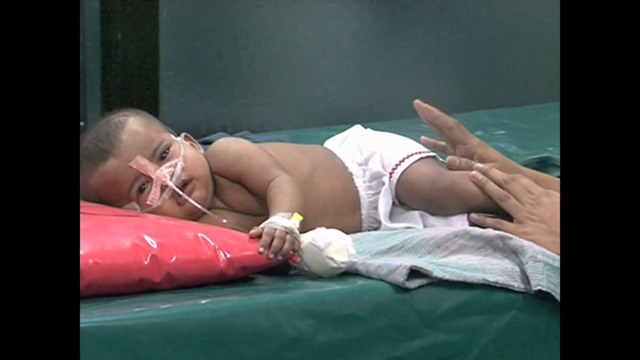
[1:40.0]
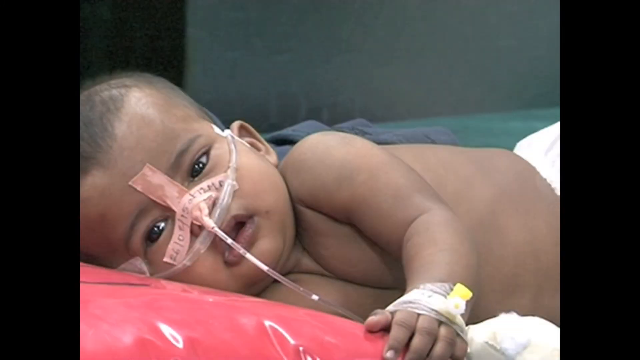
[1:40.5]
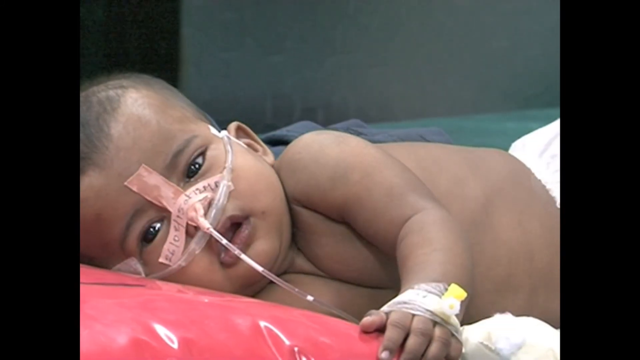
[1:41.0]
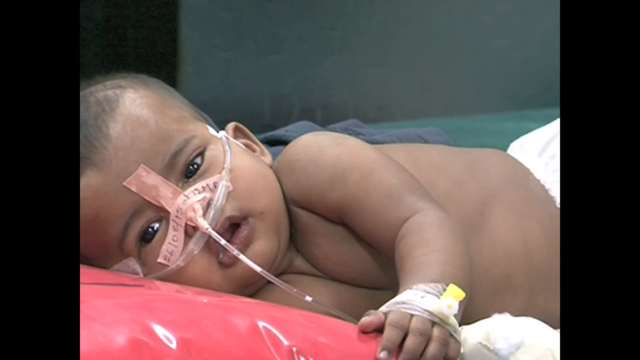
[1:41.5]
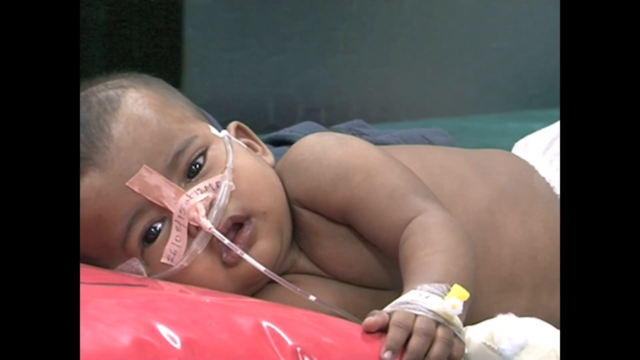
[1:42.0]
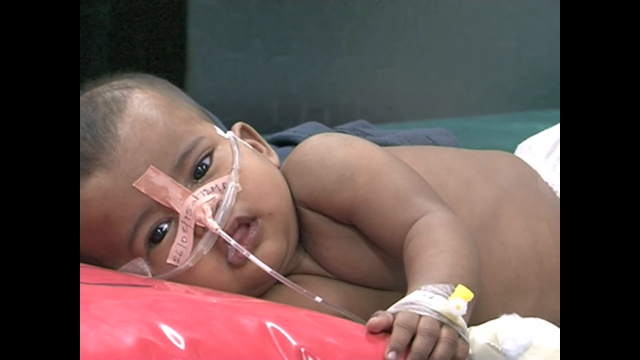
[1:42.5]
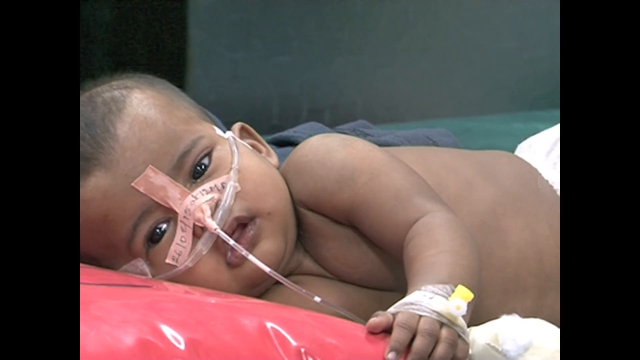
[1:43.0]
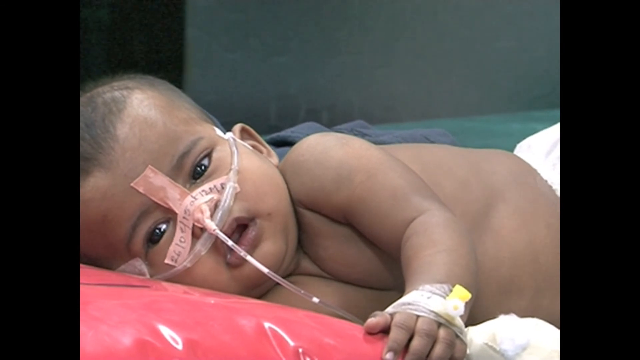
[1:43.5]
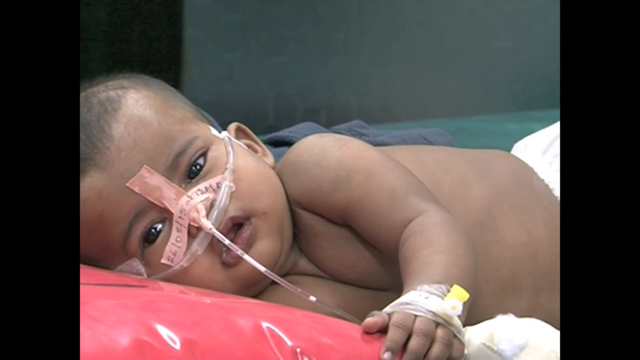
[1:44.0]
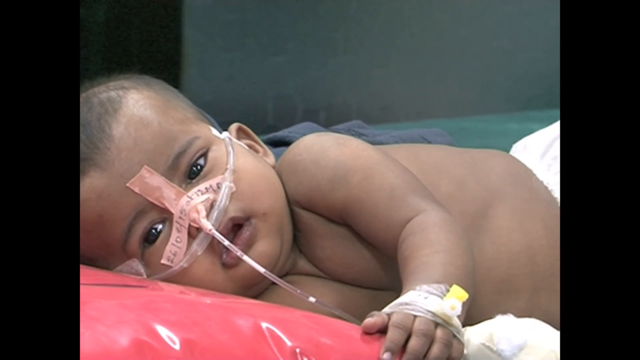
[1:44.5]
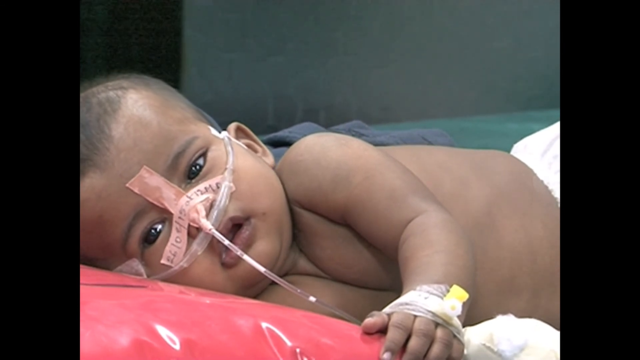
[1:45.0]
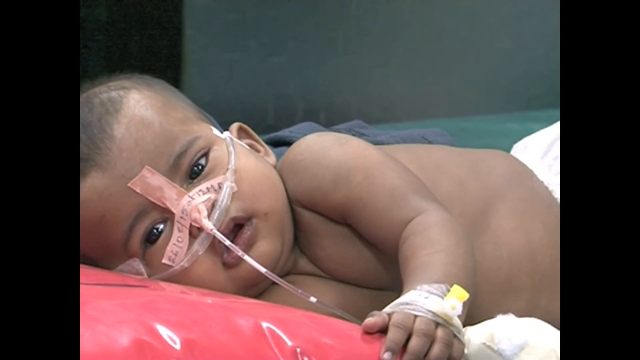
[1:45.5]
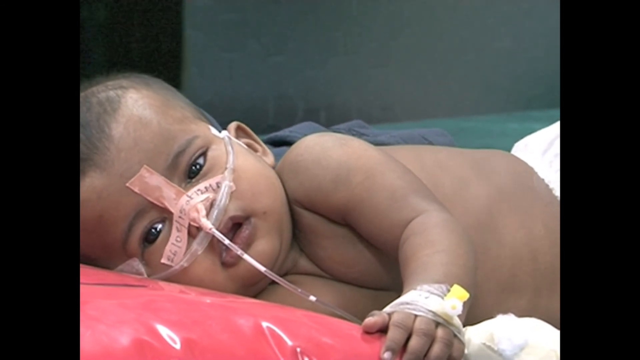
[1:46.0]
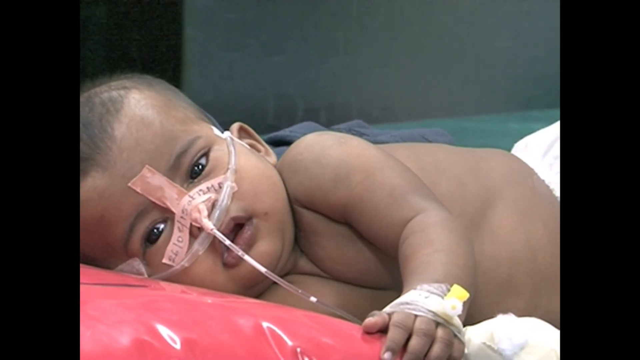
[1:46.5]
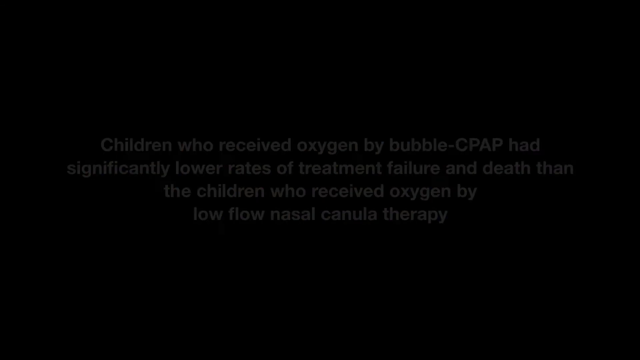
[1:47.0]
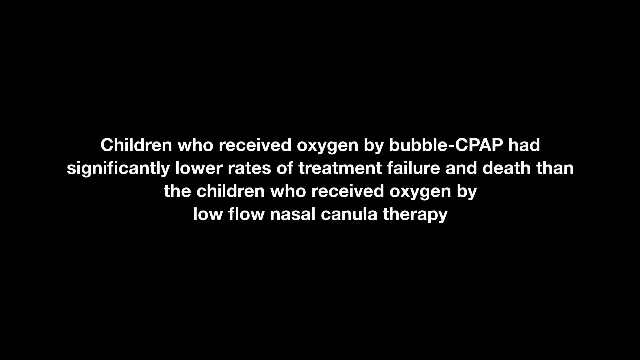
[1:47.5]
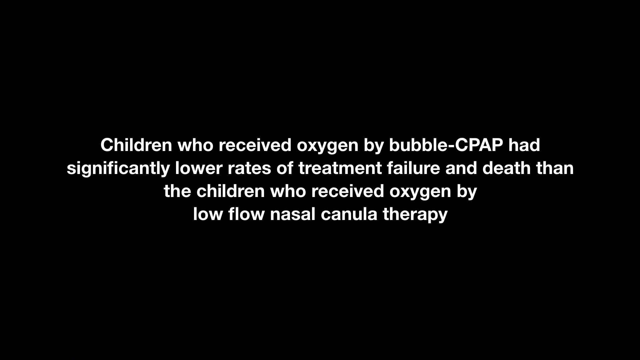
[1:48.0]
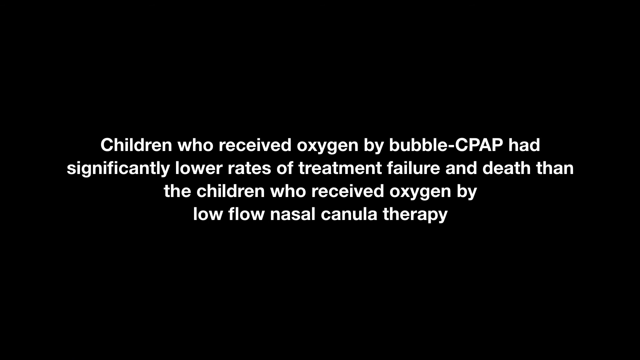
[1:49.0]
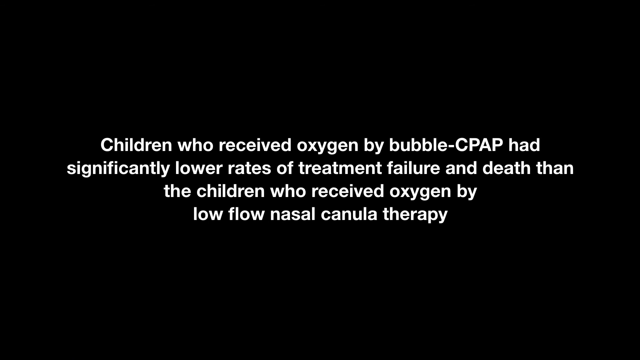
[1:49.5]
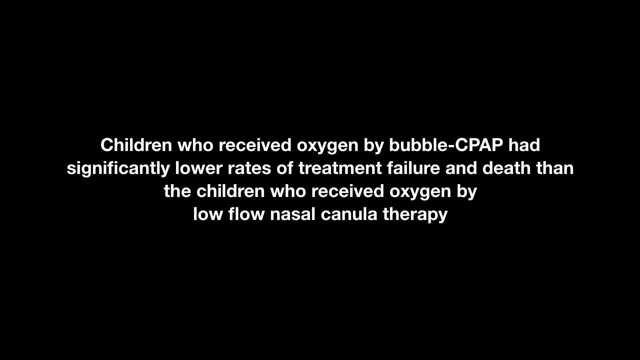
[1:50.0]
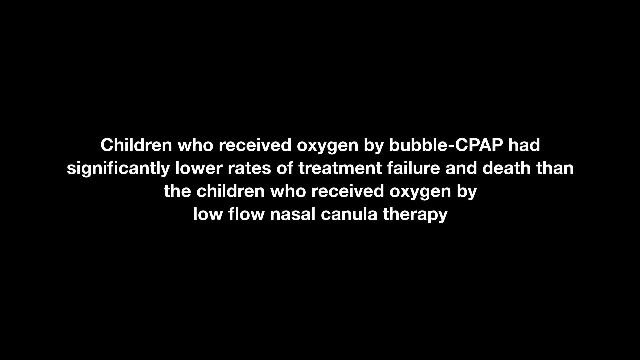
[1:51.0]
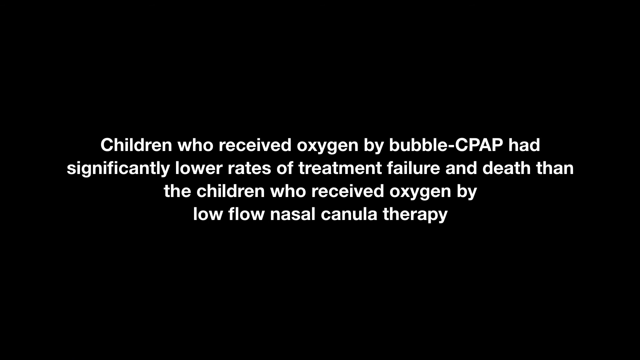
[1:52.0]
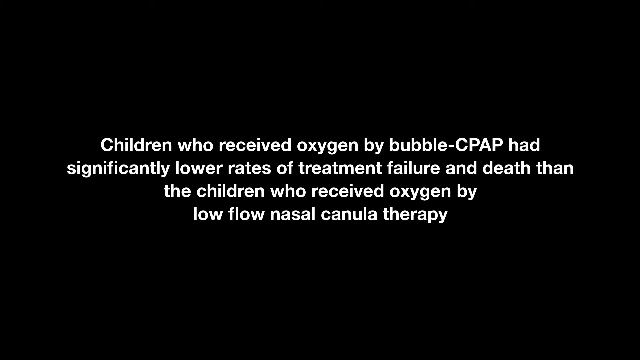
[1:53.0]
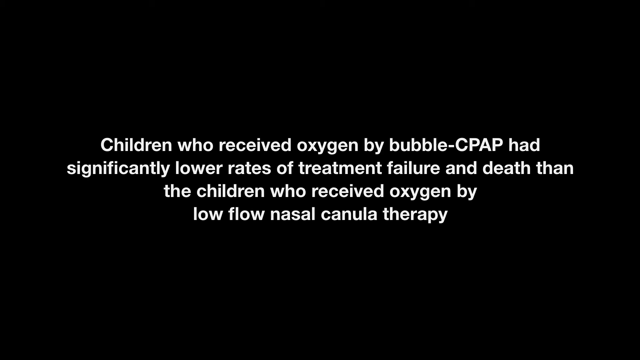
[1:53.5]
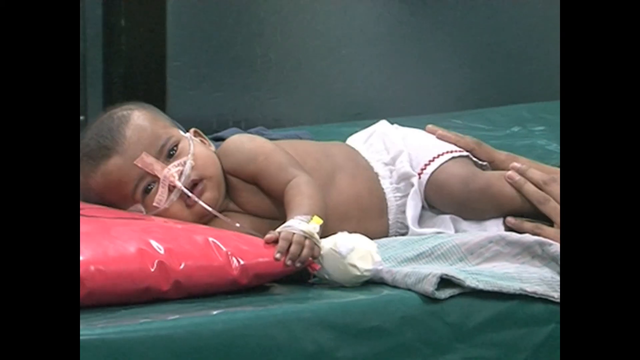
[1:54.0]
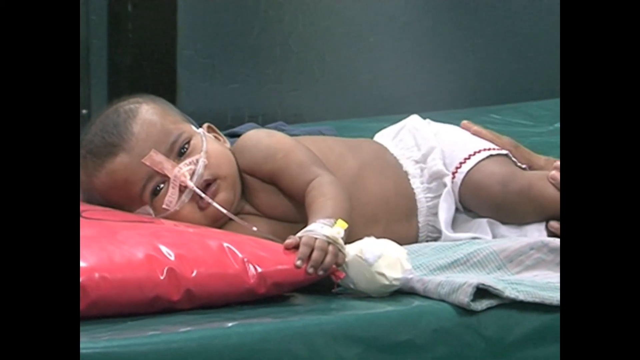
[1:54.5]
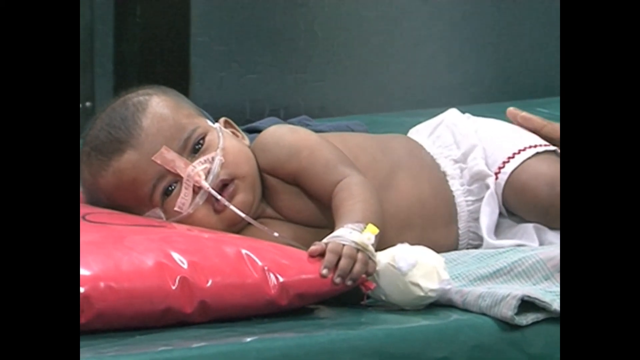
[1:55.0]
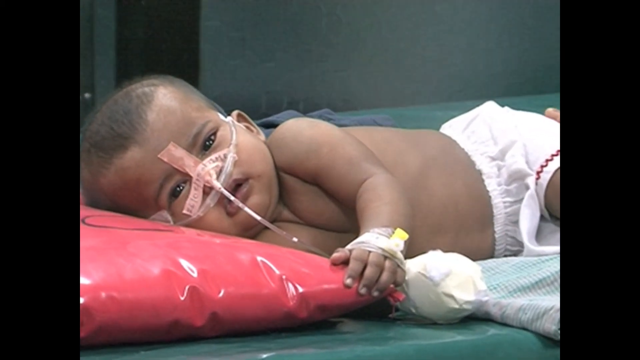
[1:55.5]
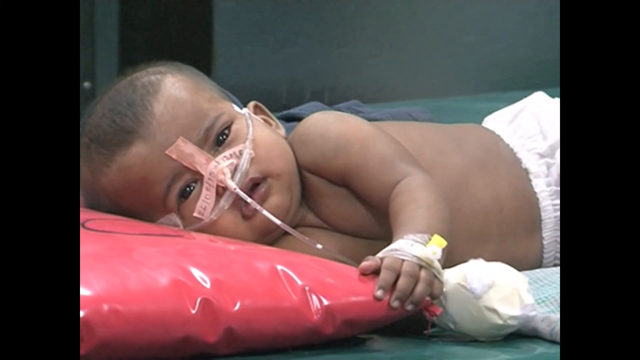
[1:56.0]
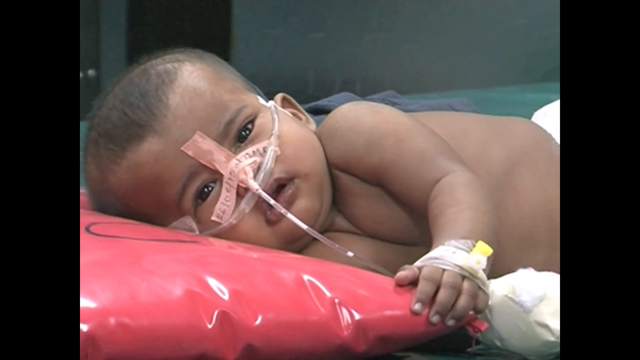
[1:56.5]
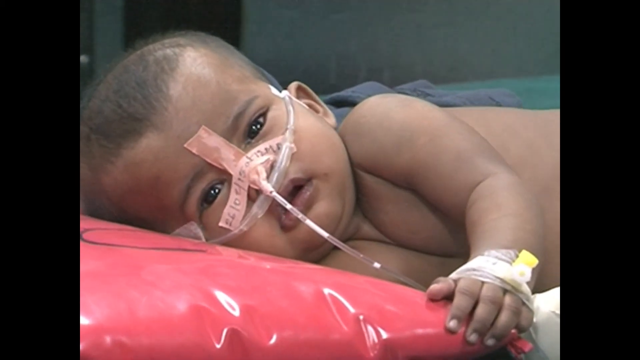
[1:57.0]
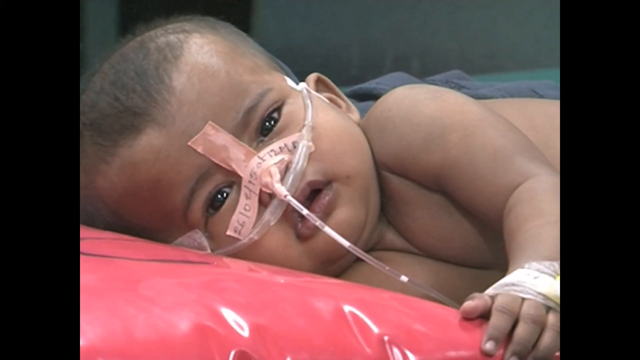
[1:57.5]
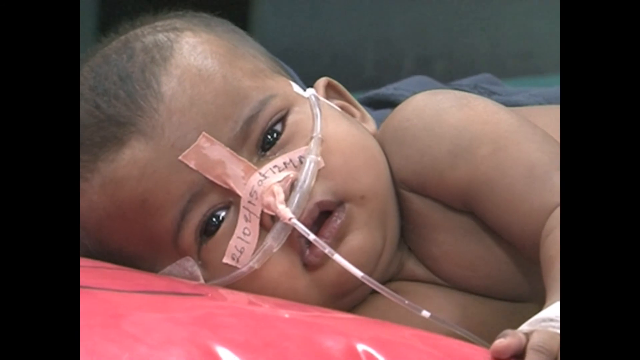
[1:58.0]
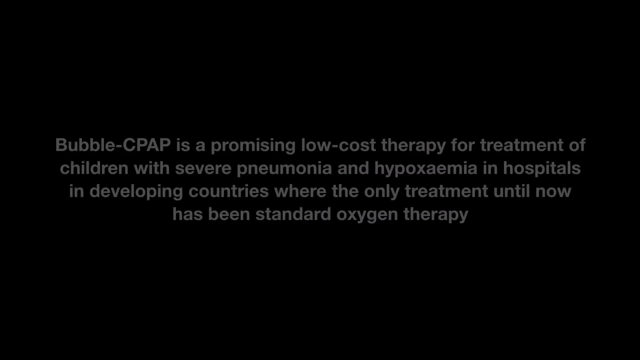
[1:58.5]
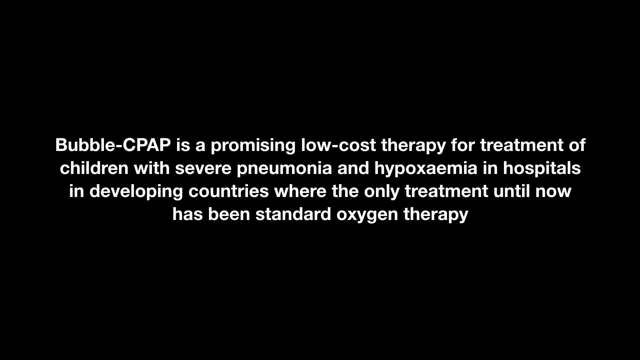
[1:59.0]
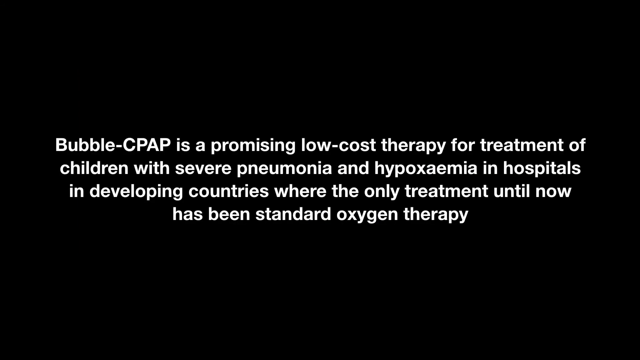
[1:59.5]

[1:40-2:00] The video zooms in on the baby, who is panting a lot, sticking its tongue out and breathing heavily while looking down at the floor. It has big brown eyes and short brown hair and lies on what looks like a red plastic cushion or pillow. The screen goes black and white text reads "children who received oxygen by bubble cpap had significantly lower rates of treatment failure and death than the children who received oxygen by low flow nasal cannula therapy." The video cuts back to the baby, now looking directly at the camera and still panting a lot. The stickers strapping the tubes from the machine to the baby are visible; one sticker has text on it that looks like numbers such as 2610 along with other information.